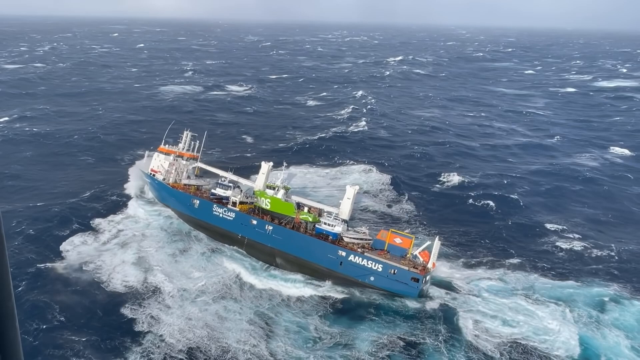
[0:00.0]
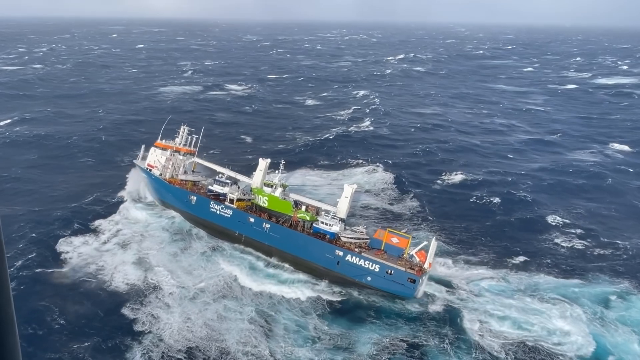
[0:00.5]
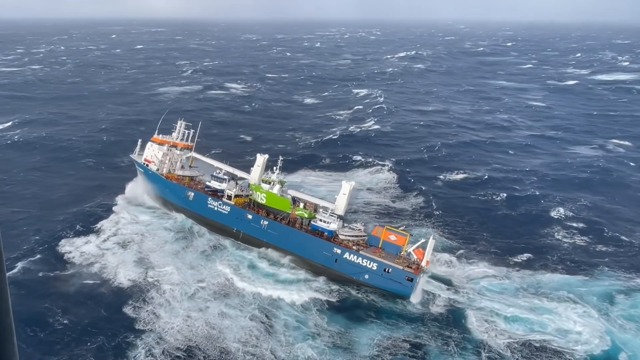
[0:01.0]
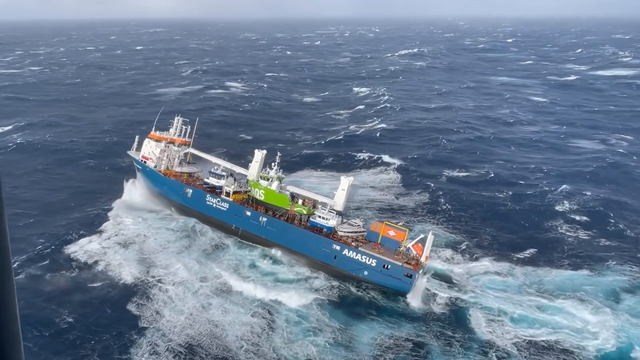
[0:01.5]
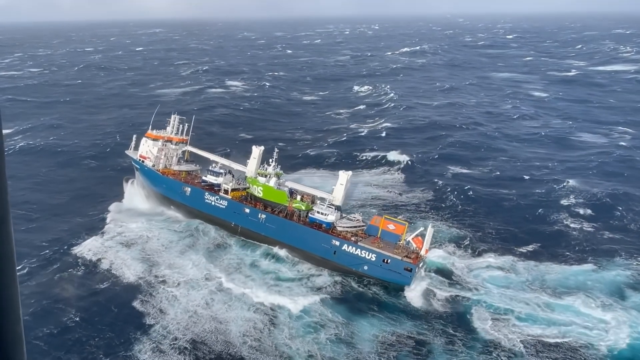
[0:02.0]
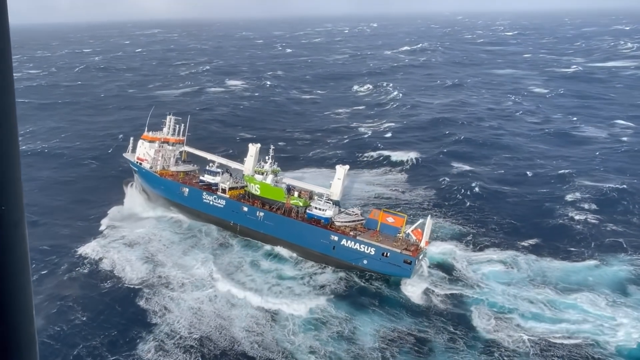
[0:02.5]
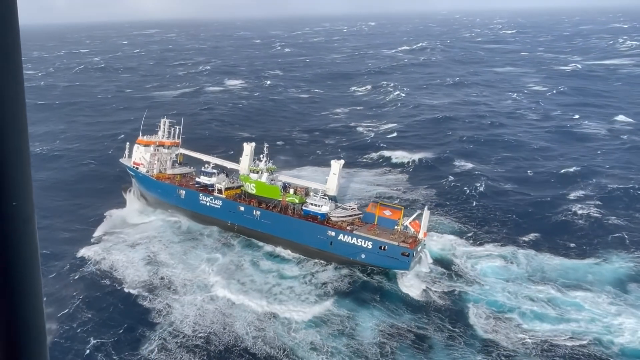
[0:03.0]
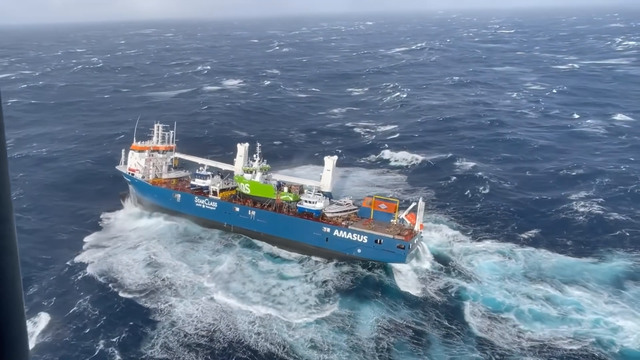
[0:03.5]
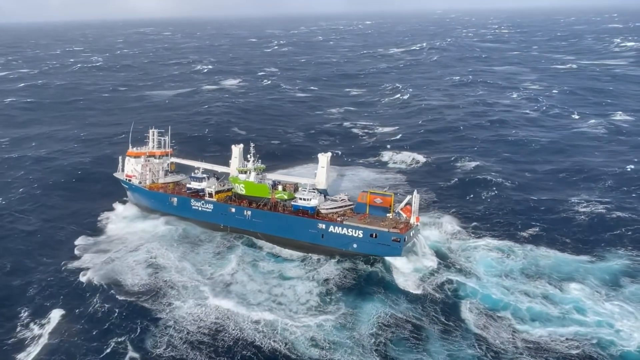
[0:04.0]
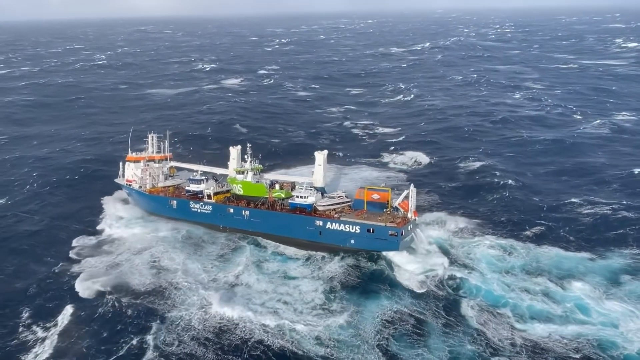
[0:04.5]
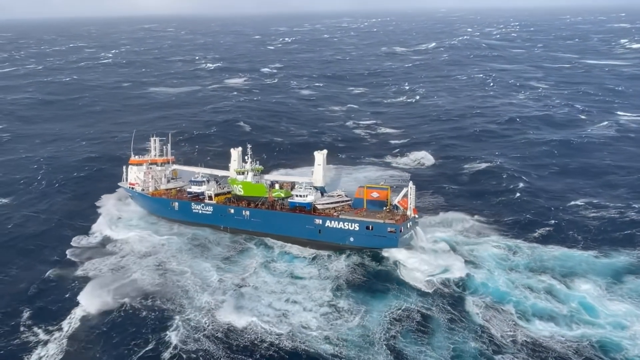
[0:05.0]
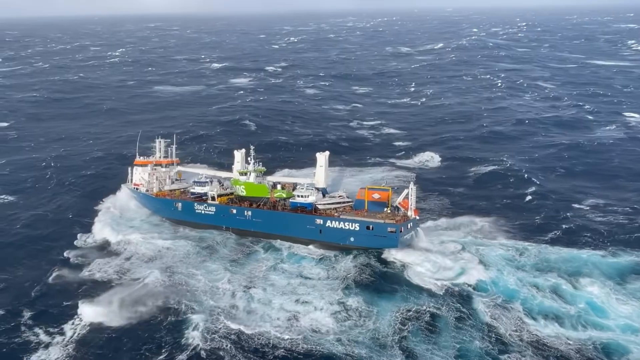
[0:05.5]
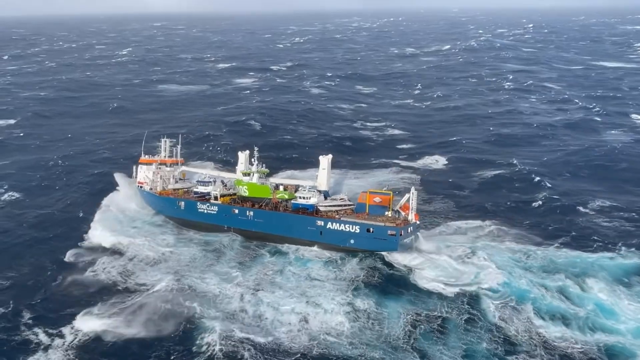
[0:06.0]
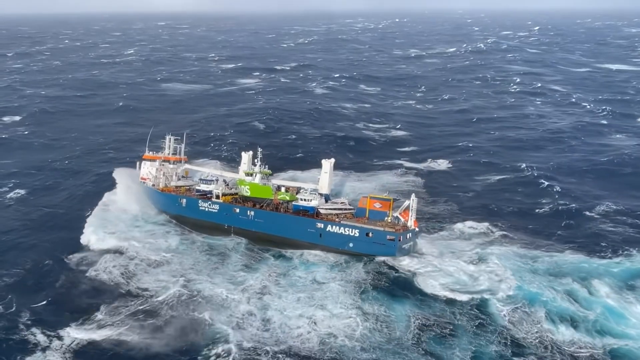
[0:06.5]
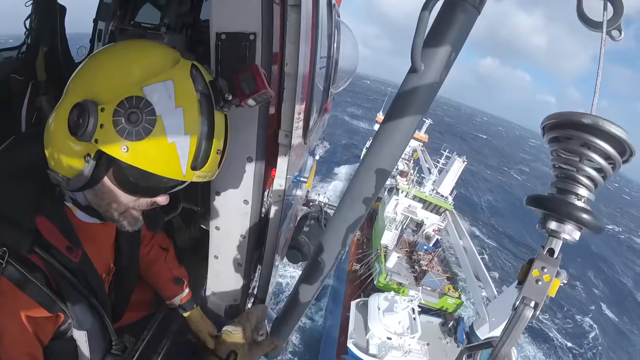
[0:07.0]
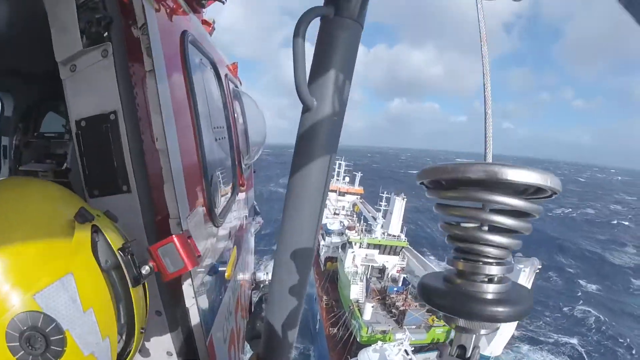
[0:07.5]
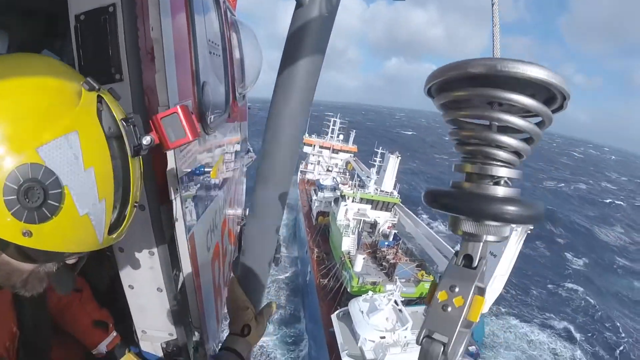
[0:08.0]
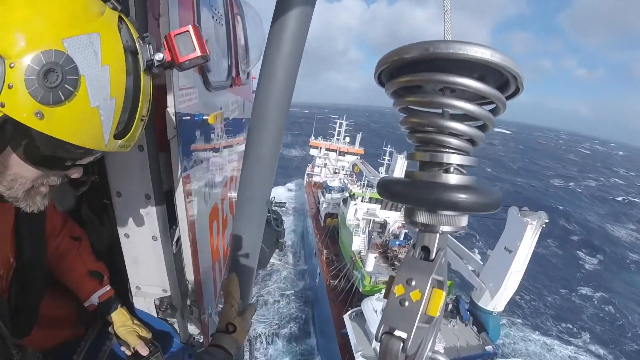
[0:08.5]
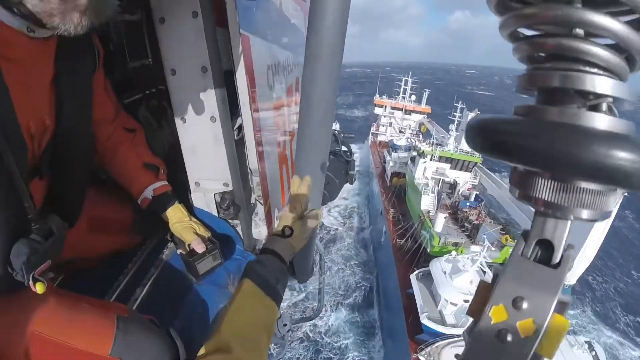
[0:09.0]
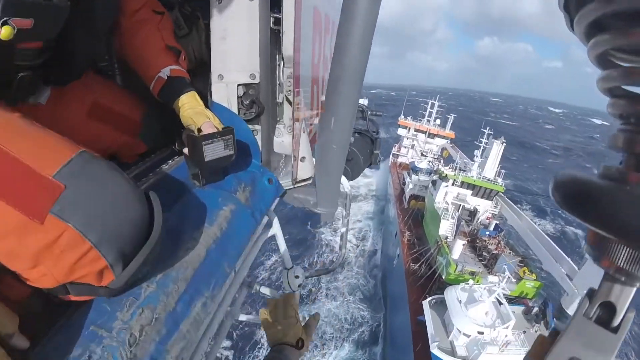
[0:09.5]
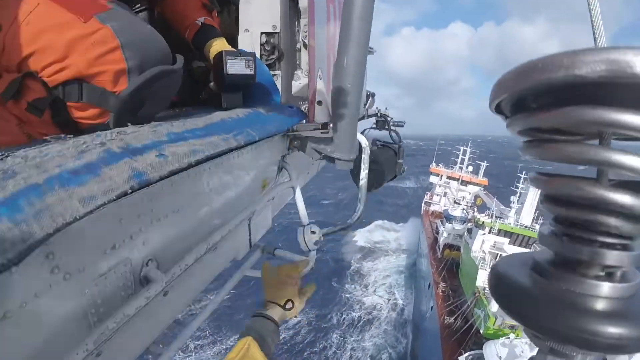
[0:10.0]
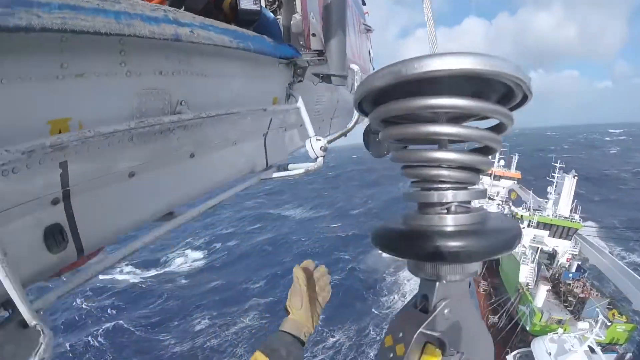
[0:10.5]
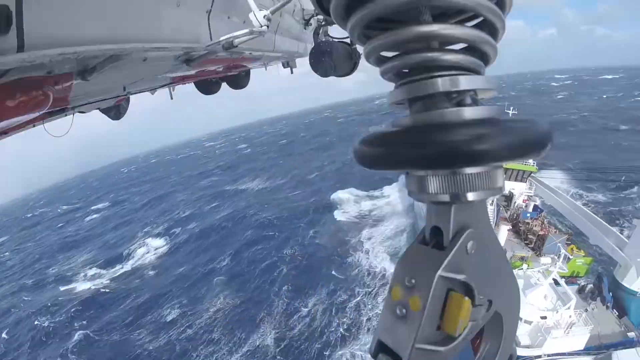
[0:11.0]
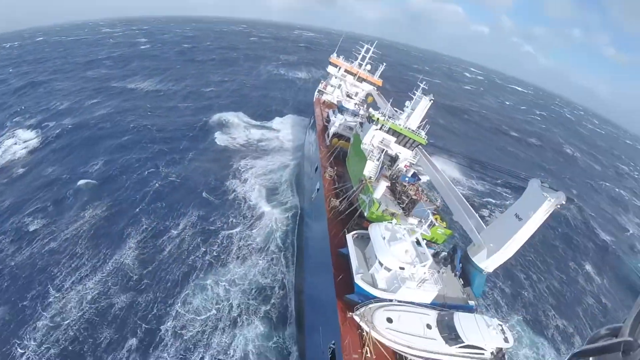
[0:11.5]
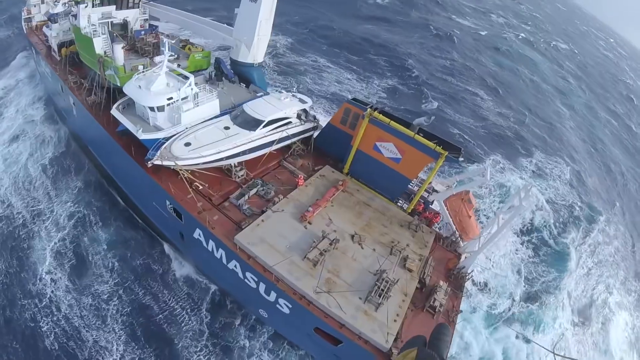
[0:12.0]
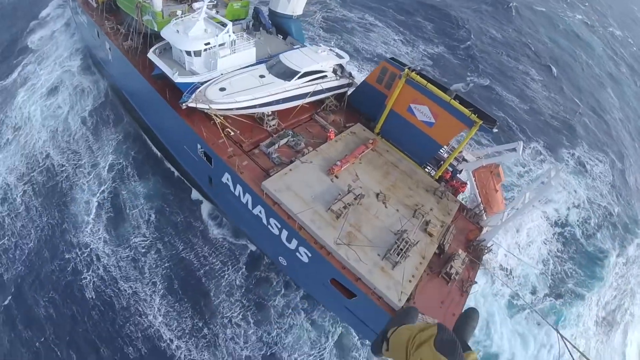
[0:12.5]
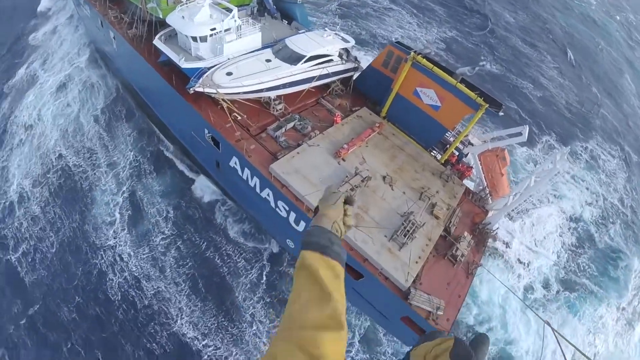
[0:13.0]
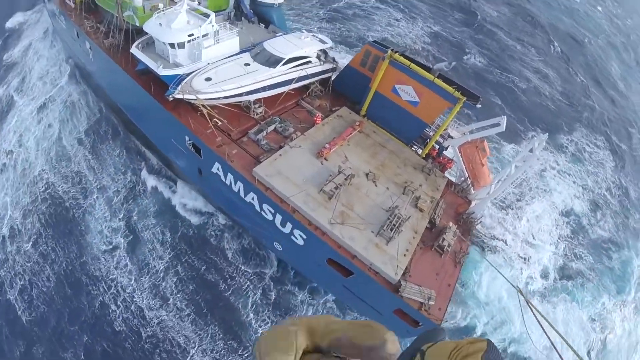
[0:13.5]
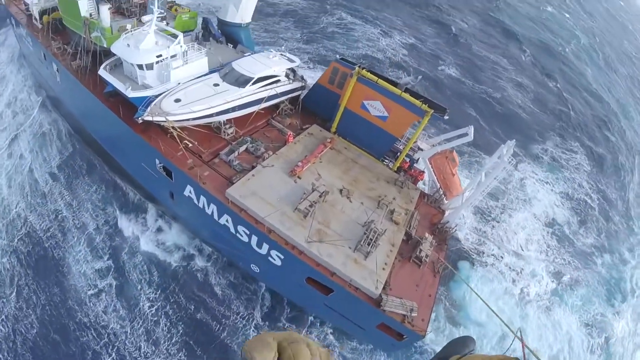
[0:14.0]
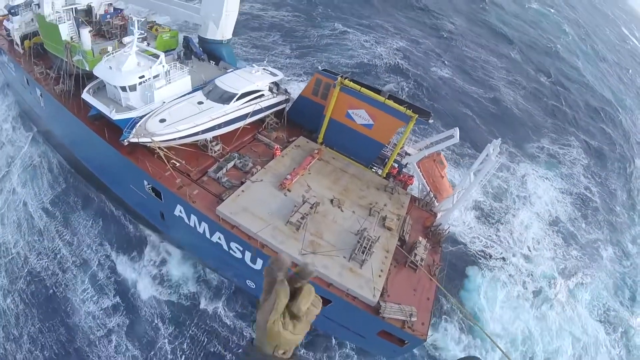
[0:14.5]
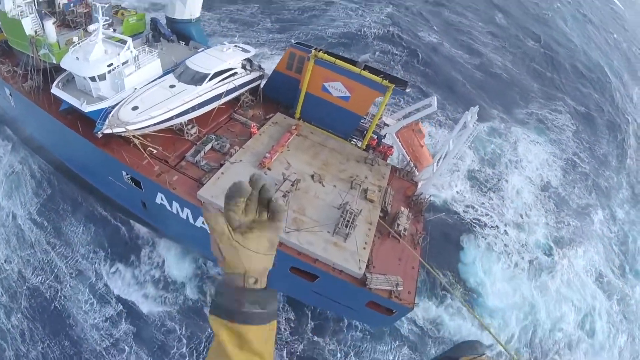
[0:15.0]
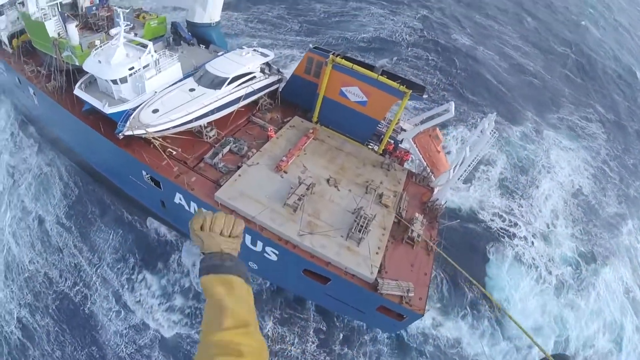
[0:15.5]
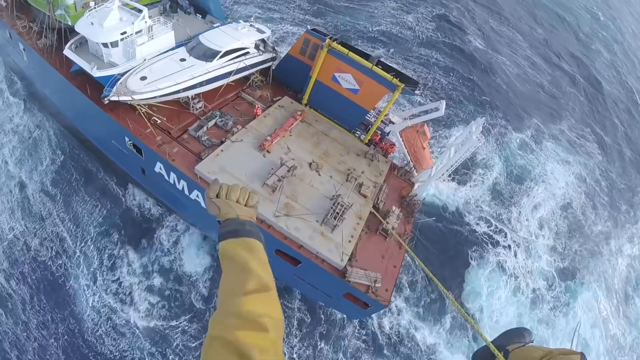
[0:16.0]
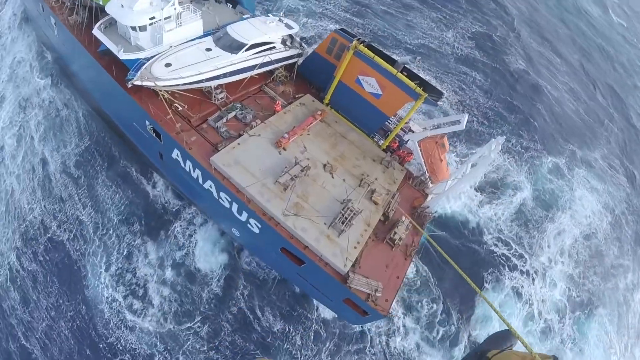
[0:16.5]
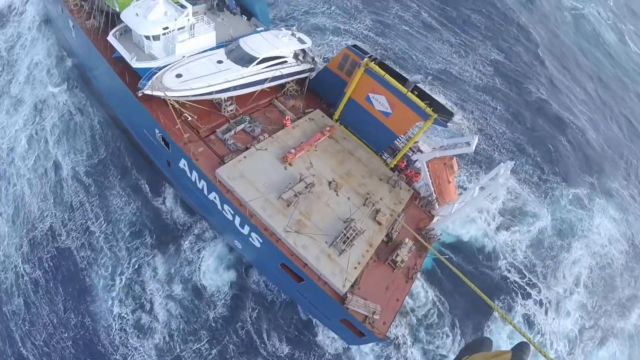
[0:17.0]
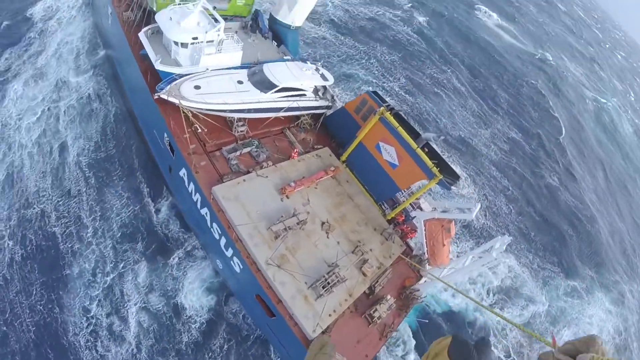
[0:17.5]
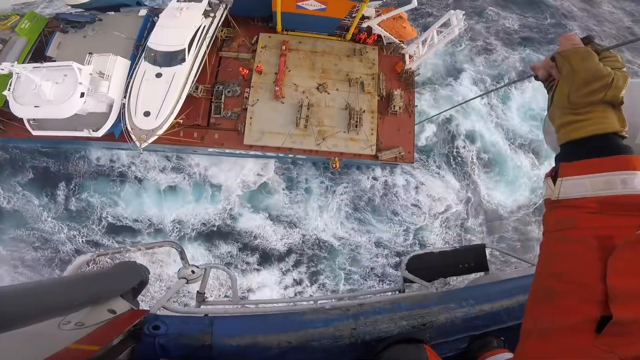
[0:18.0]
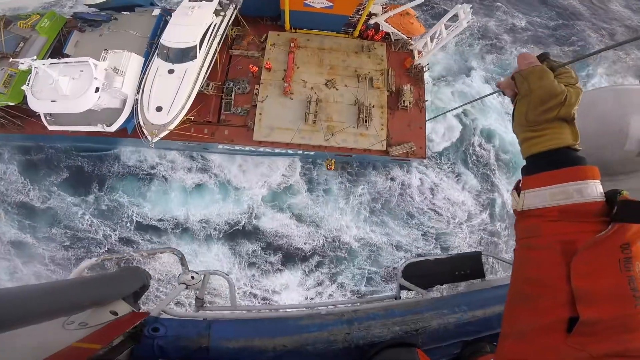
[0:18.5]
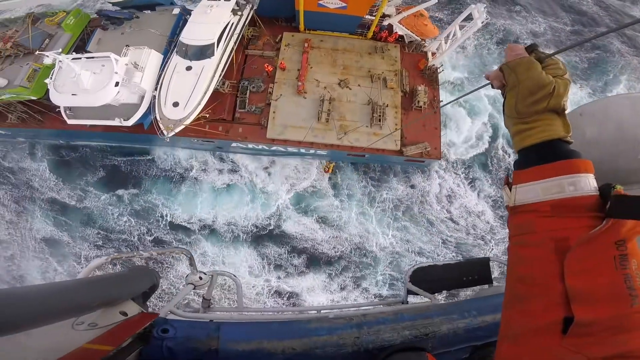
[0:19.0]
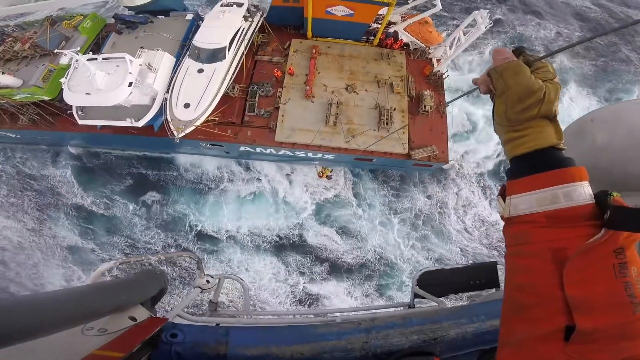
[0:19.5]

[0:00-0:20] A shipping vessel is seen from the perspective of a cameraman on another ship. The larger vessel carries several smaller boats, and it seems to be hitting the waves fairly aggressively. Later, a man sort of pulls down on what seems to be a rope and signals toward the vessel, making a pulling, towards-himself motion. A rope runs from the larger ship to the smaller ship, and the cameraman moves down on the rope to make the signals.